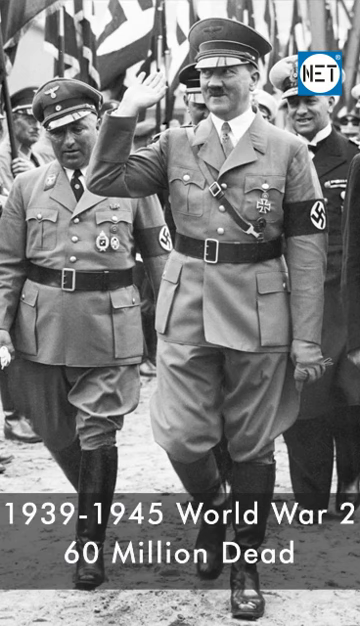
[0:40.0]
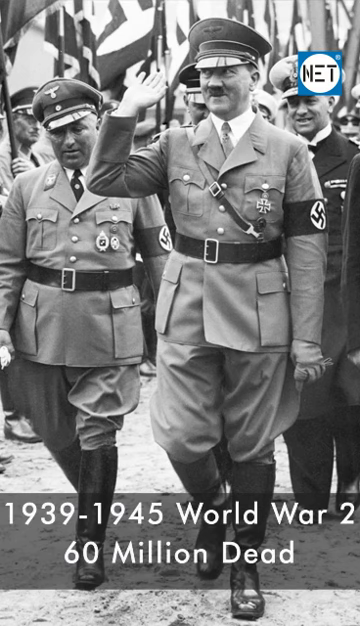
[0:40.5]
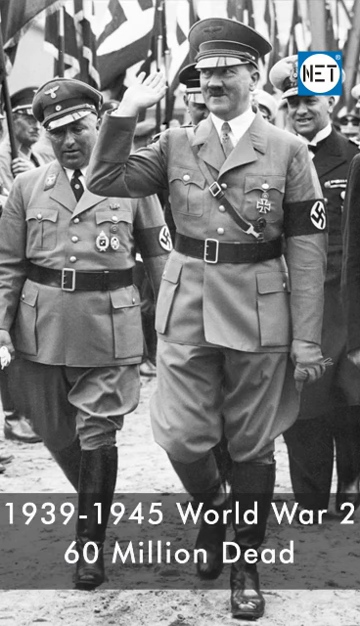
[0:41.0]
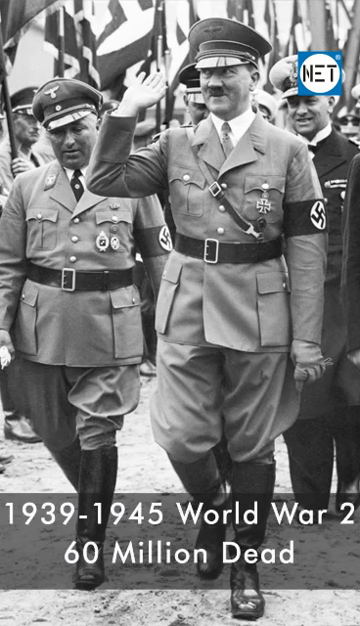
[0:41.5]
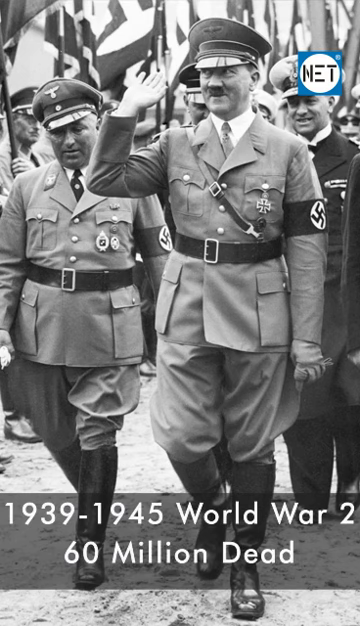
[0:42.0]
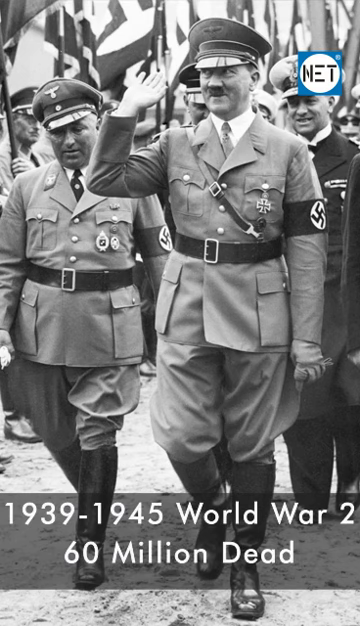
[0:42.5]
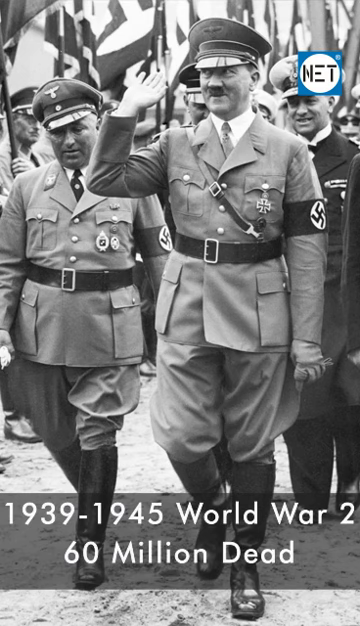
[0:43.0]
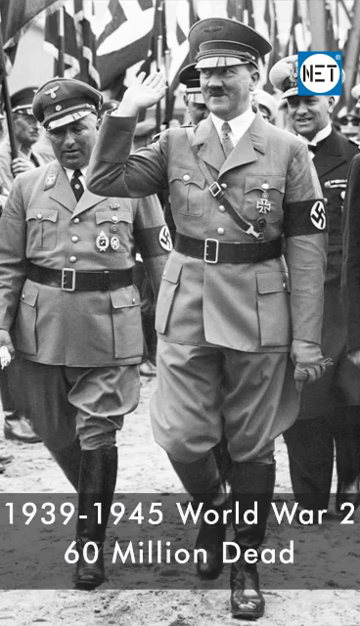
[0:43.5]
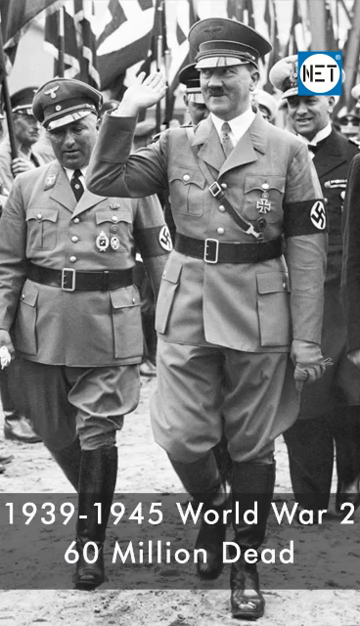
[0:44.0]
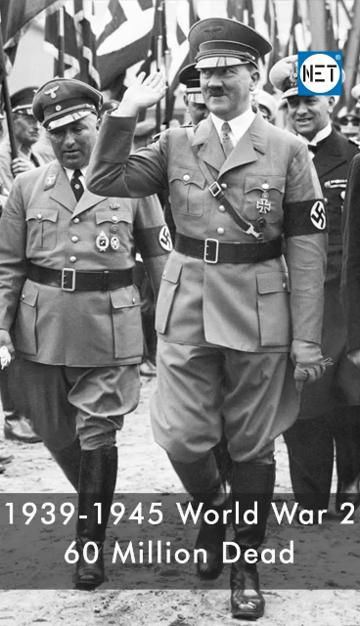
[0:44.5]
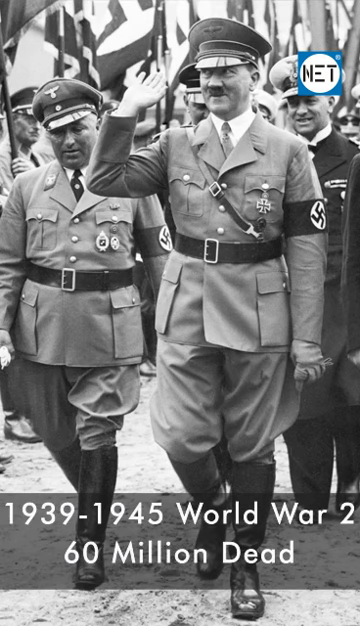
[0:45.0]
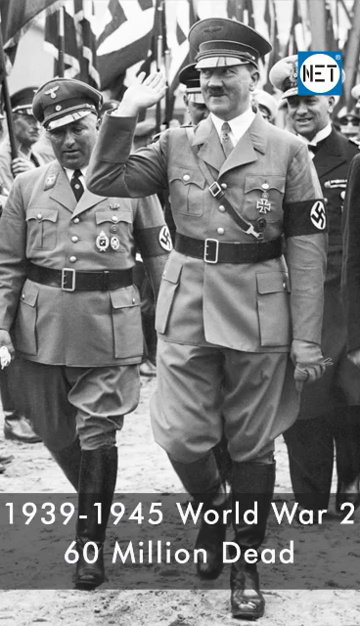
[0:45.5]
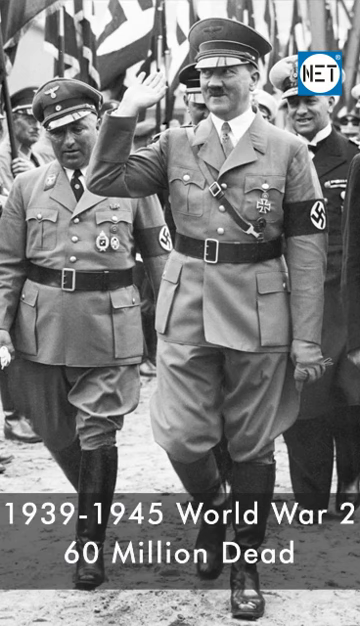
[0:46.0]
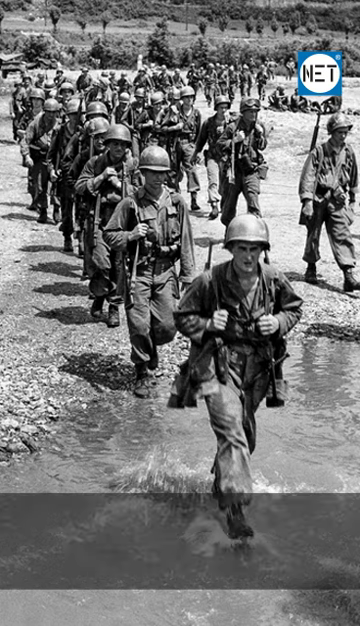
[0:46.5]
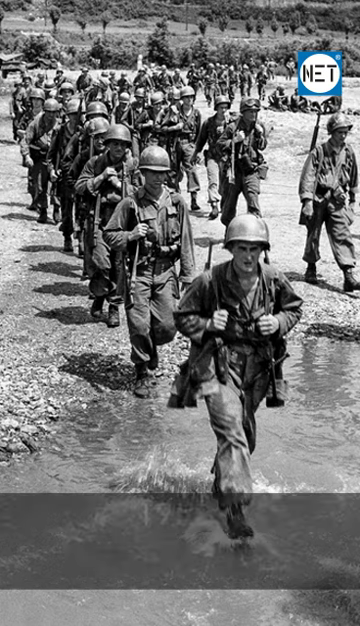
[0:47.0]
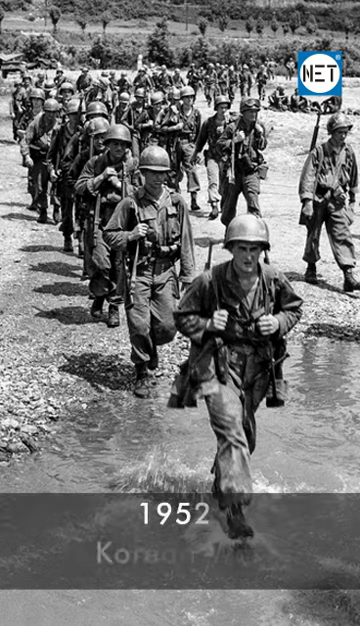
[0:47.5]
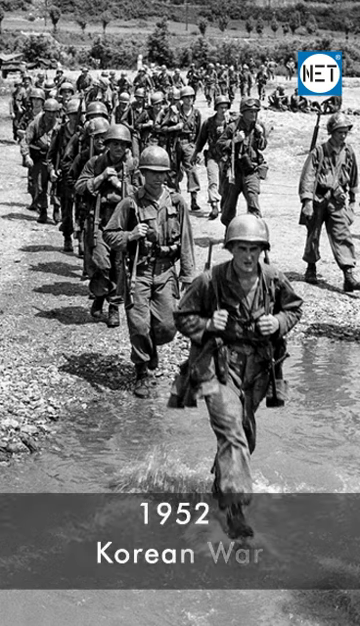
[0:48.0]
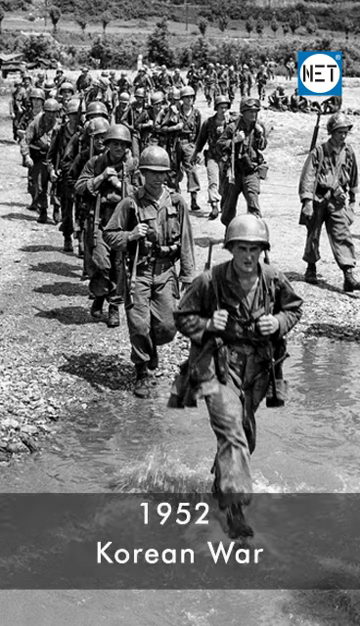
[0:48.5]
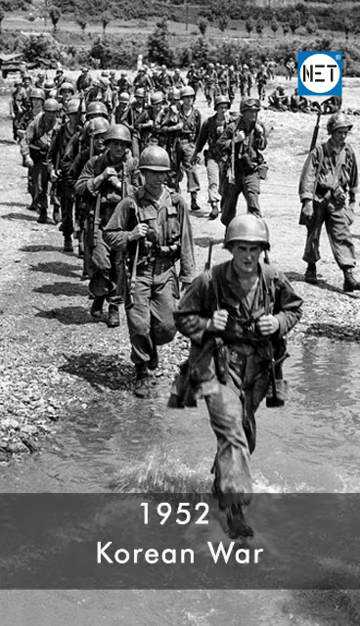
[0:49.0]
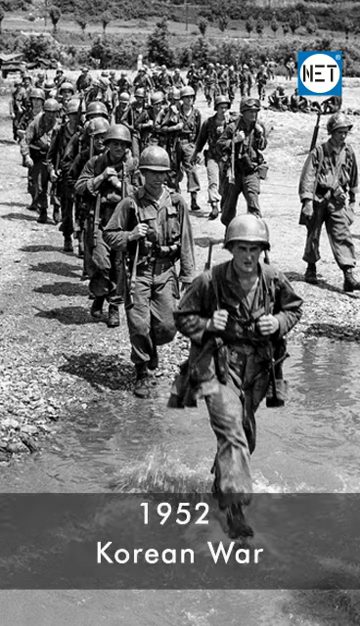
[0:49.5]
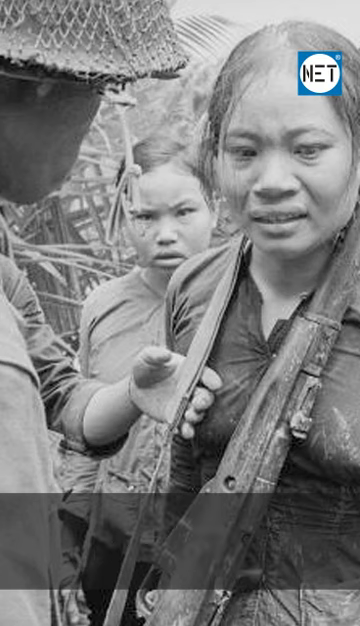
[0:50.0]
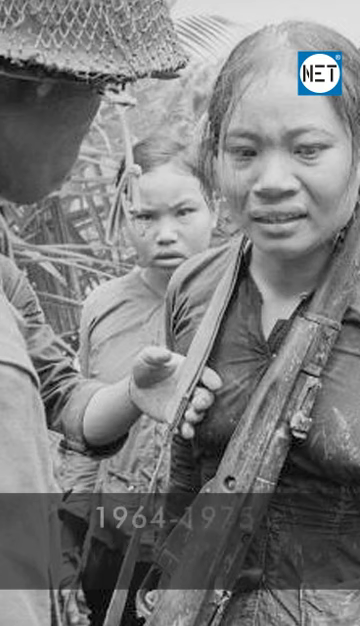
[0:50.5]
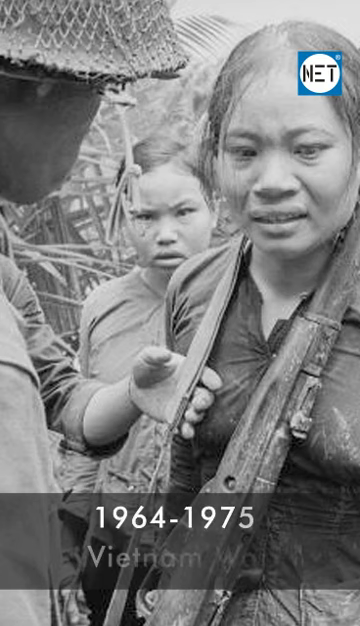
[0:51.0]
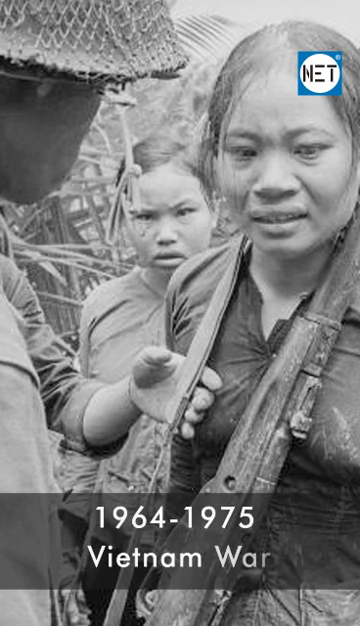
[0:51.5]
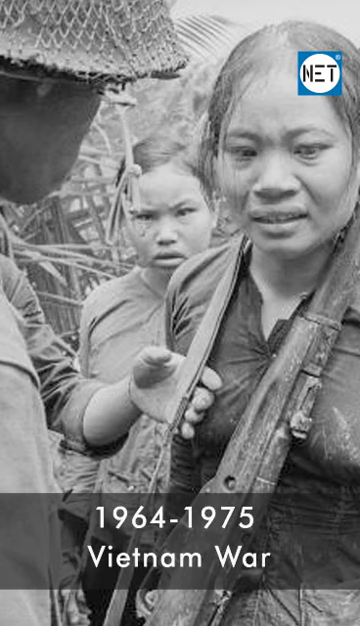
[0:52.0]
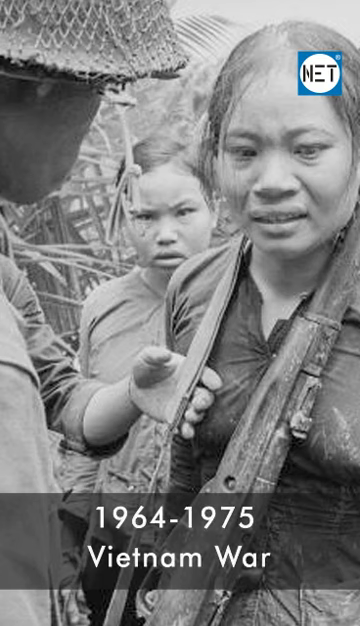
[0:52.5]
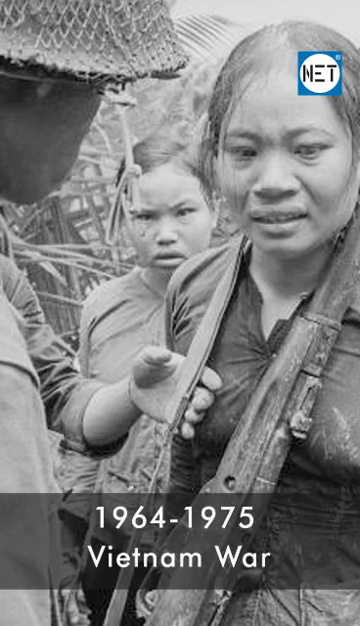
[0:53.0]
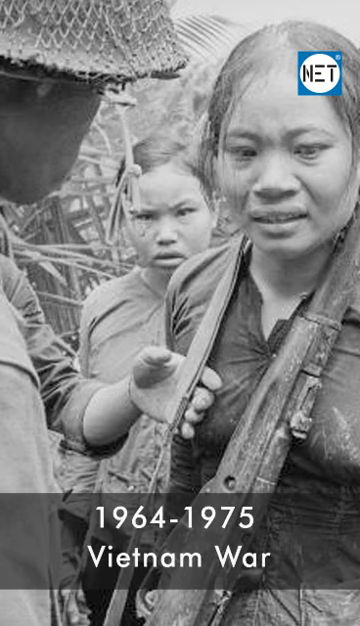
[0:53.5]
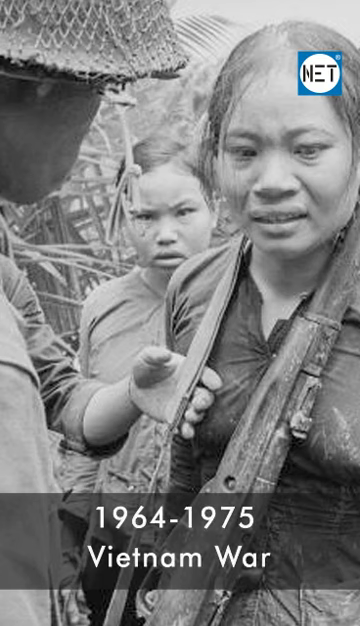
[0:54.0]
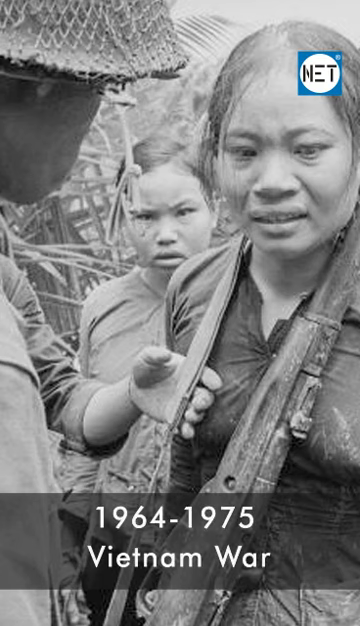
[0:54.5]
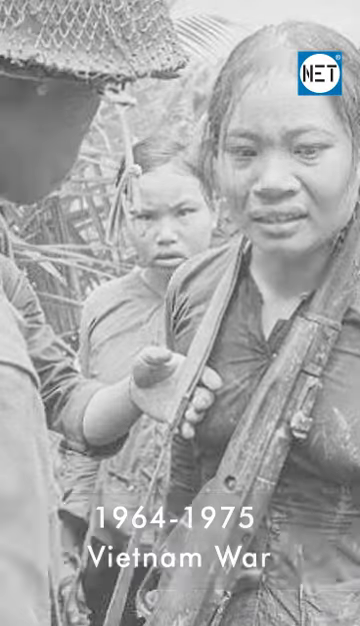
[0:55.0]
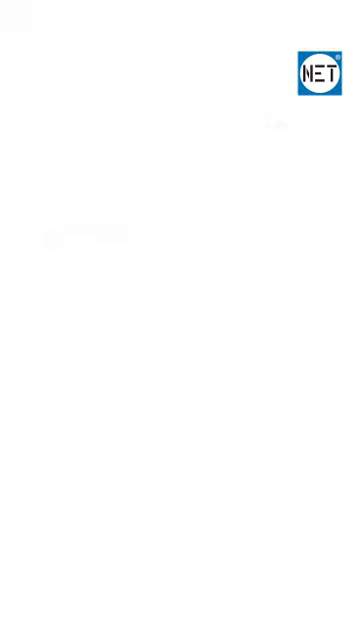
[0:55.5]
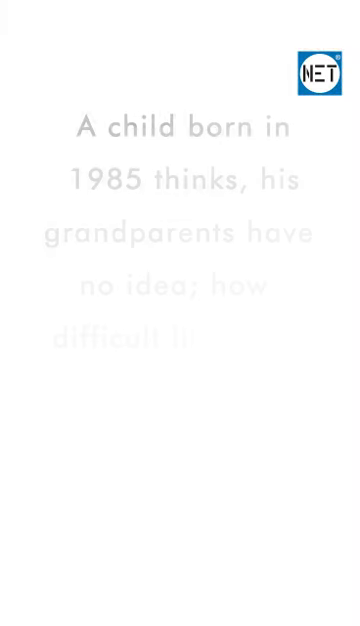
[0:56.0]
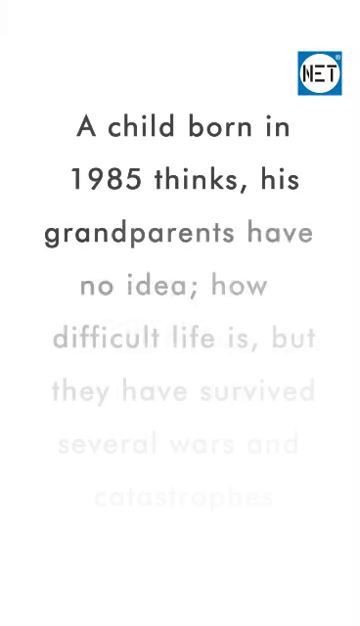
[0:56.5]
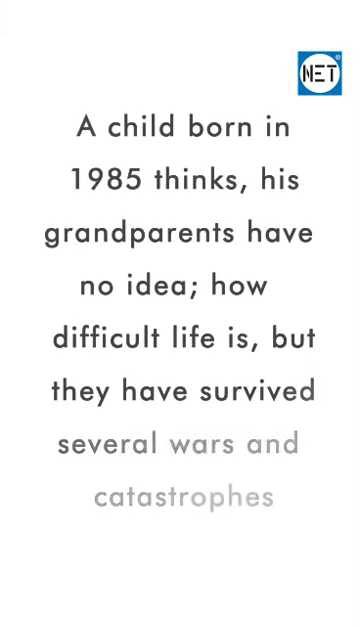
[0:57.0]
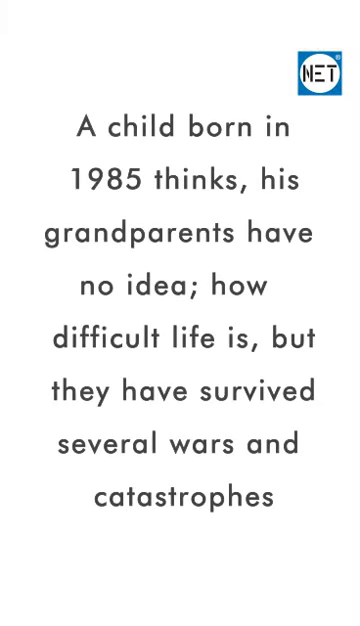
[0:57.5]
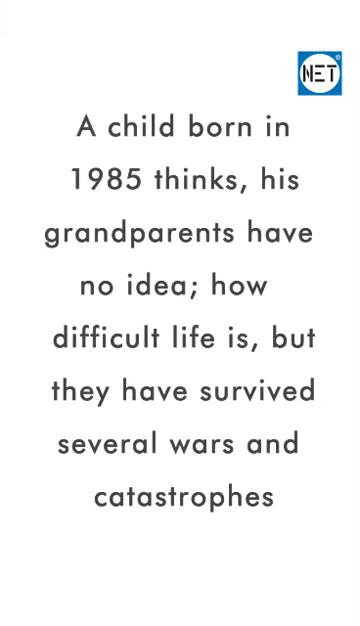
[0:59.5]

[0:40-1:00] The video continues with World War II, showing another picture of Adolf Hitler and the Nazis with their swastikas. It then moves to the 1950s with the Korean War in 1952, and then to the Vietnam War of the 1960s, showing a photo of Vietnamese people. All of these pictures are in black and white. The video then changes to a plain white screen with black text about how a child born in 1985 might think they have it worse off, and how his parents and grandparents had to live through all of these events.